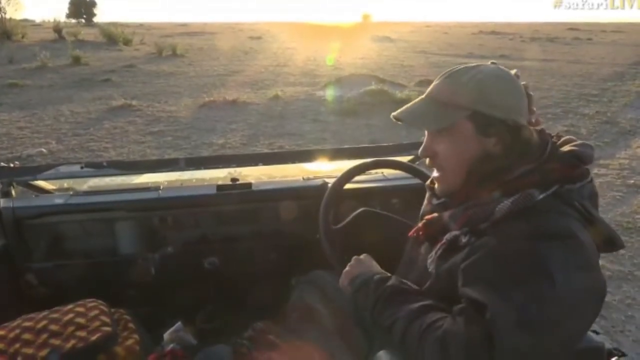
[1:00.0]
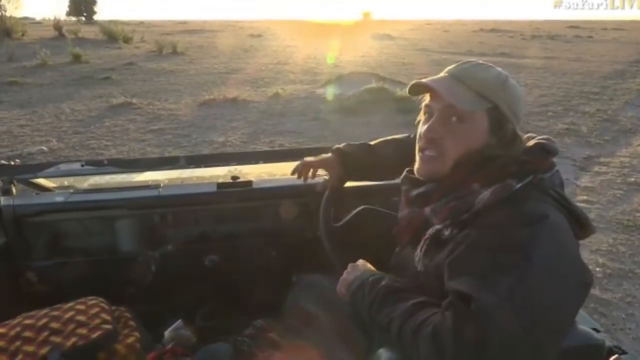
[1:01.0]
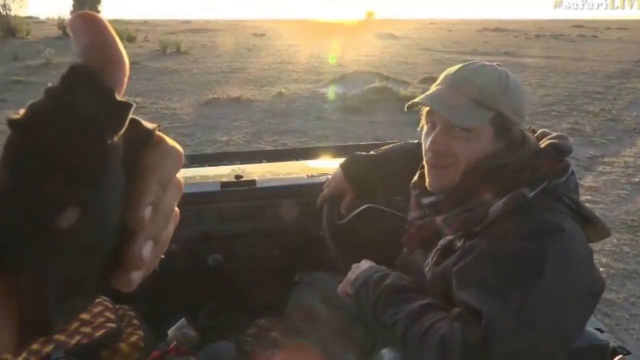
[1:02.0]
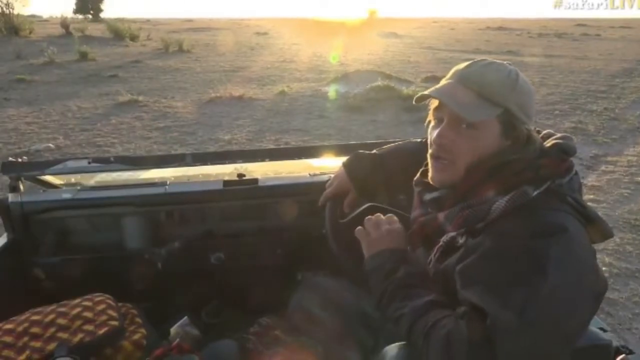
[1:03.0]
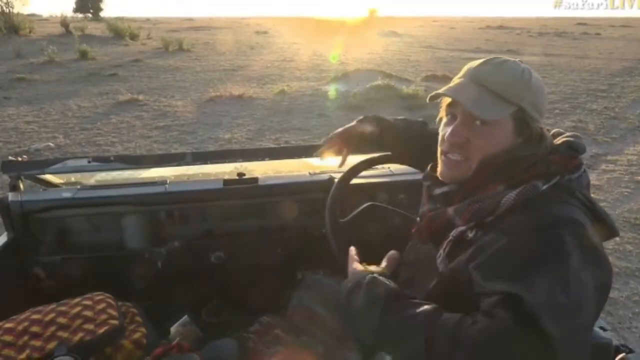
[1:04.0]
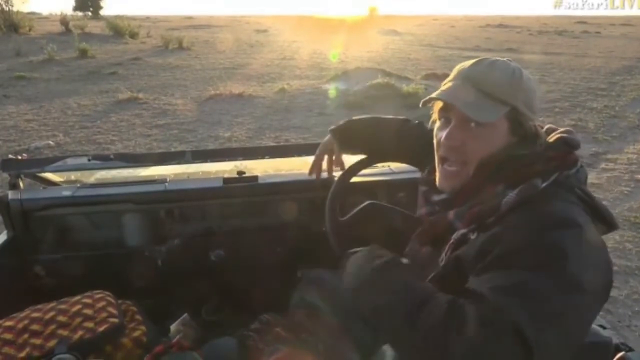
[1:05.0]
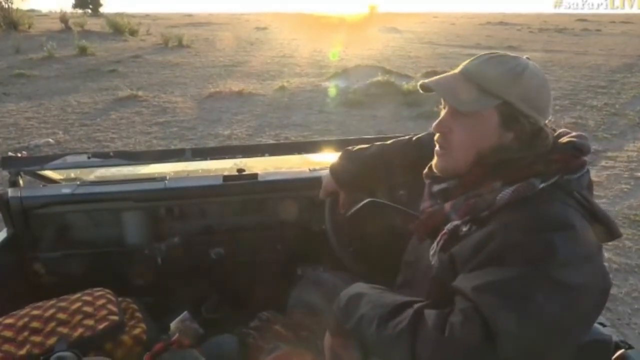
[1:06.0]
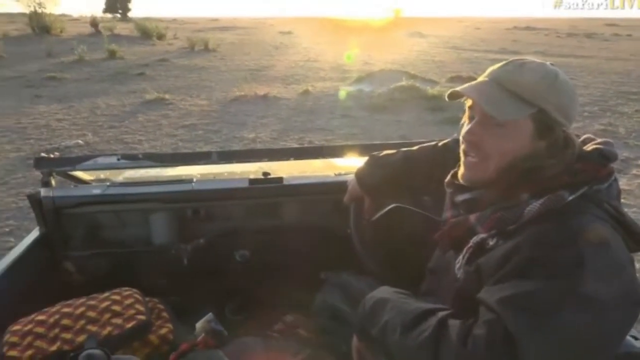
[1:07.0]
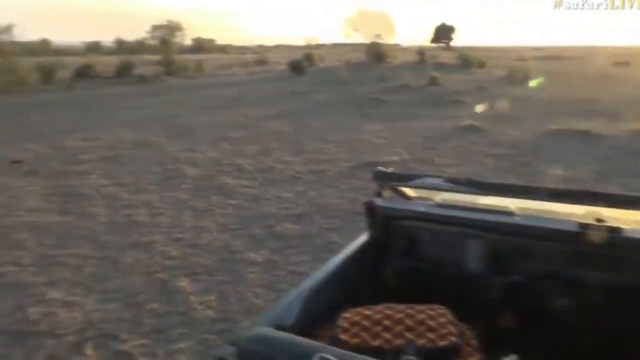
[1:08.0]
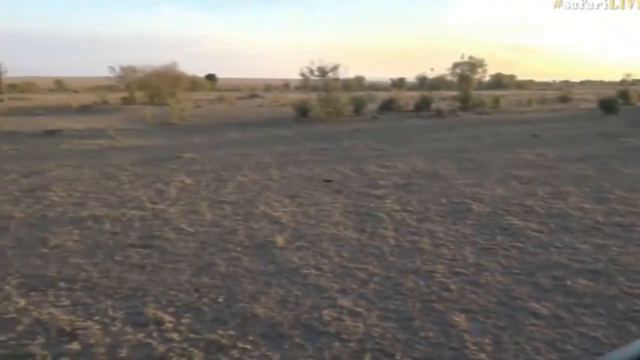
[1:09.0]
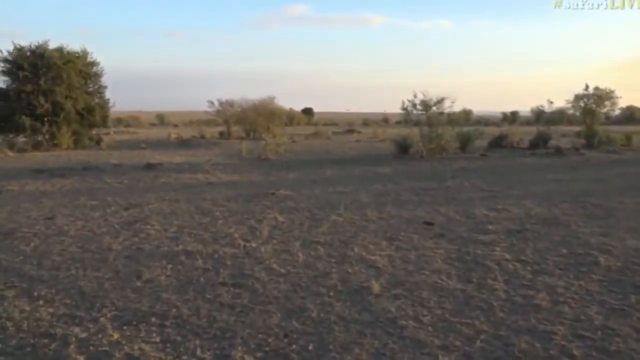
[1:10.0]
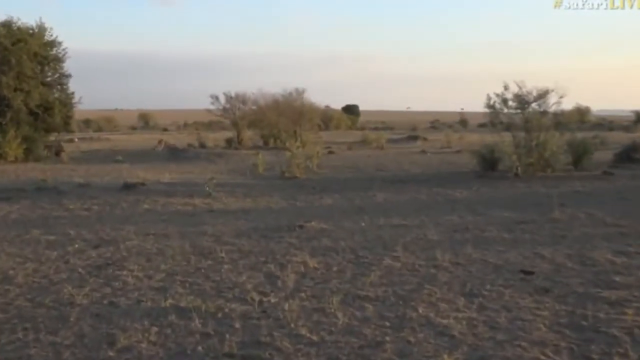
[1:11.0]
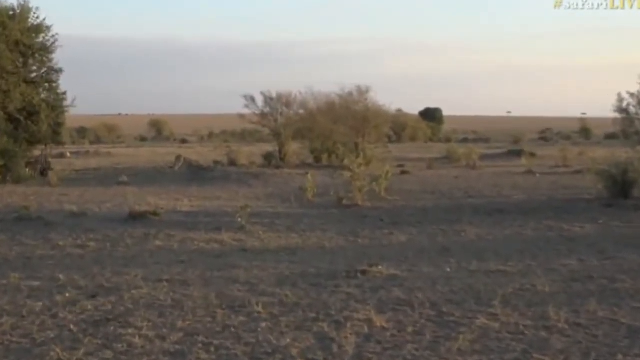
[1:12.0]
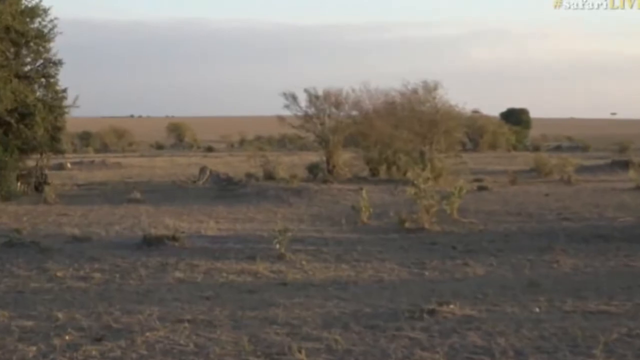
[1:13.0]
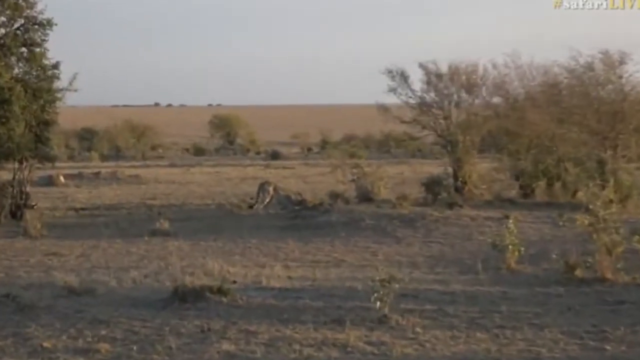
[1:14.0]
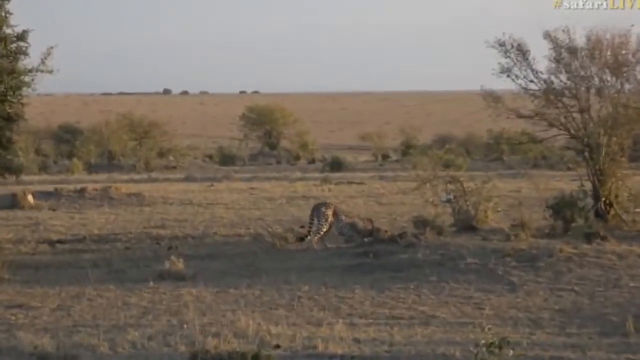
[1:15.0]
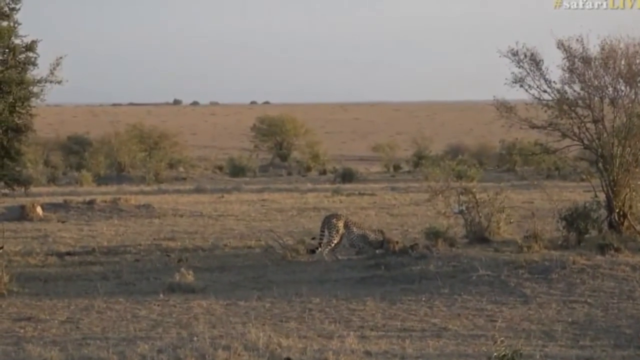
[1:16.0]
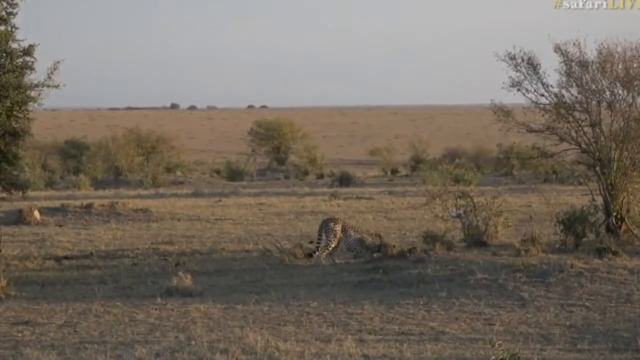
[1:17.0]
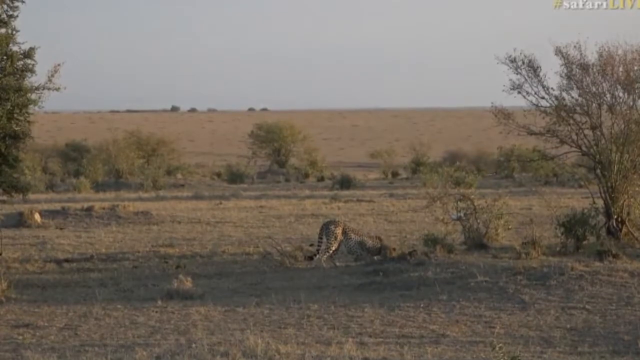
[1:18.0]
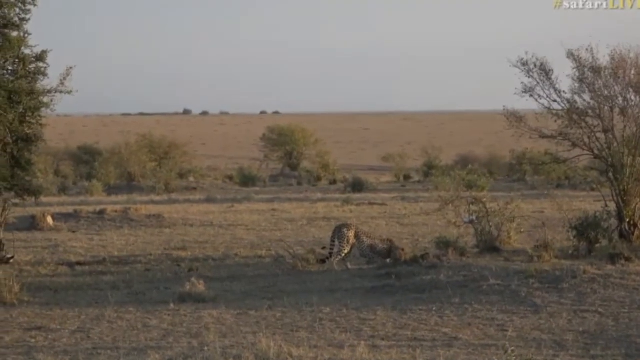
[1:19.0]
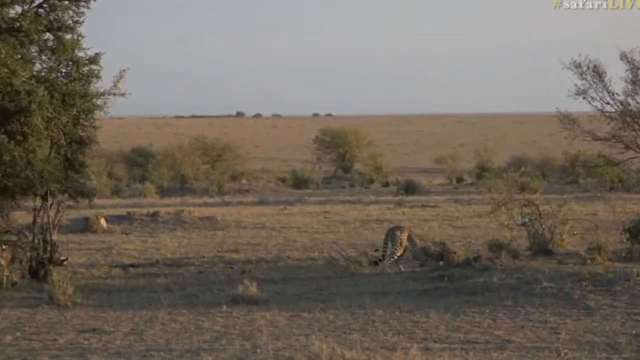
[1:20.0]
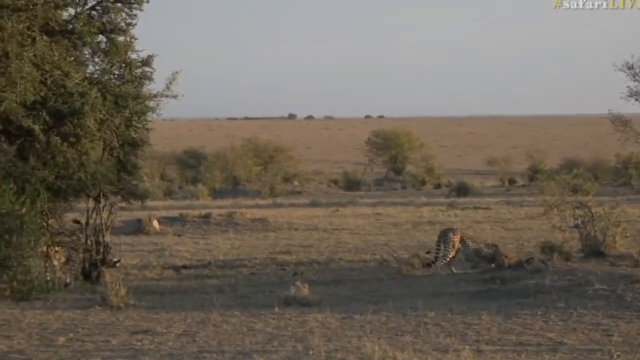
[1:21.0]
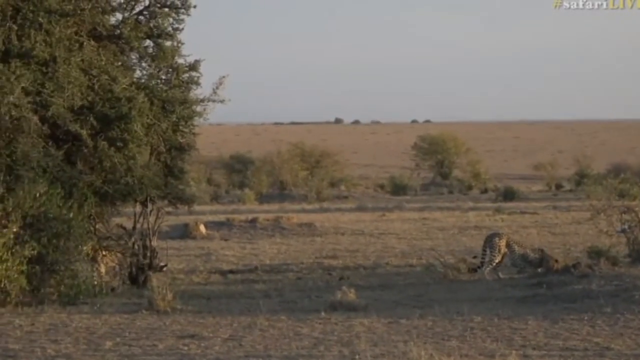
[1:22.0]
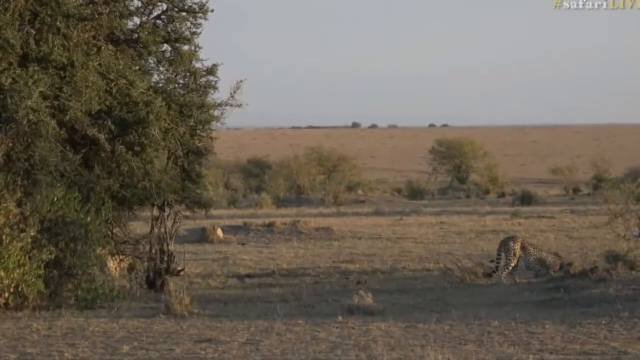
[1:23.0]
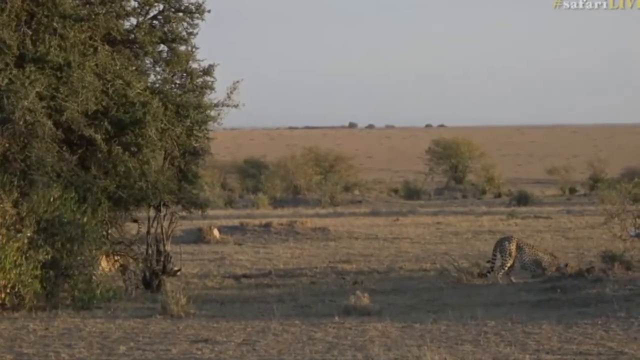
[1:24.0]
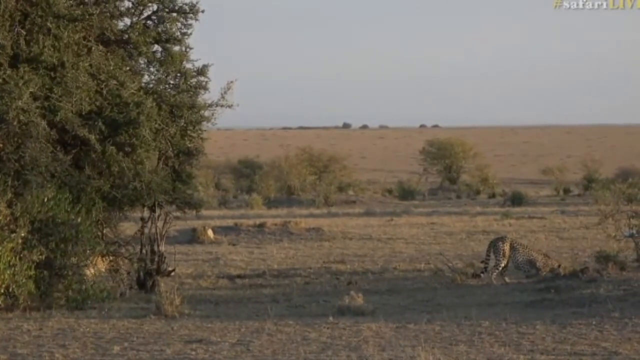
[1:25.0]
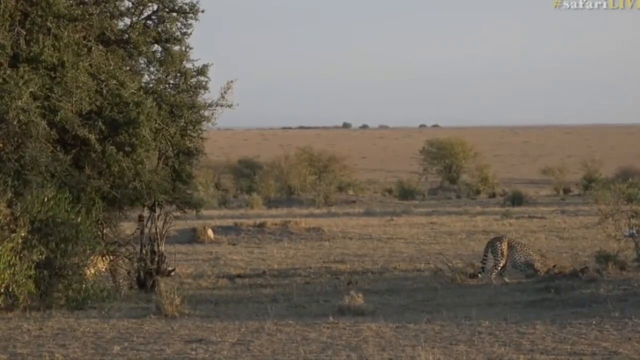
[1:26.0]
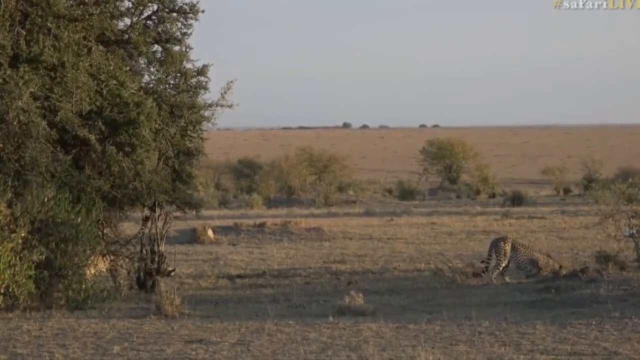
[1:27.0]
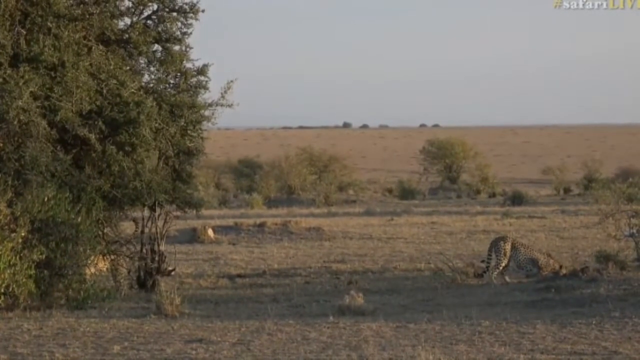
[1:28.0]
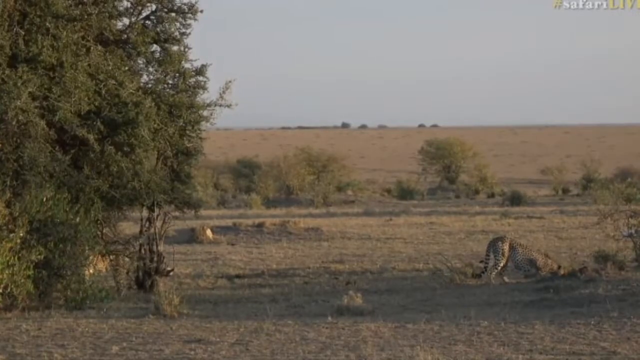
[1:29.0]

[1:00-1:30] The camera stays on the man in a car or jeep, who is dressed in a jacket and seems to be using hand gestures to explain what the cheetahs are doing. The camera zooms in on a cheetah on the ground that appears to be digging something out of the ground or struggling with something there, though what it is struggling with is not clearly visible. The camera alternates between the man and the animal, zooming in on the cheetah. Someone holds up a sign with their hand in front of the camera, and the people appear to be in a group.